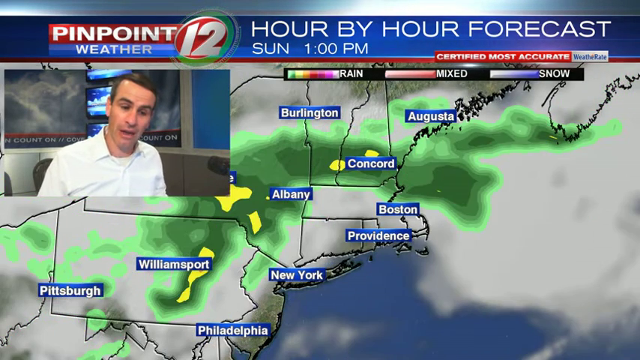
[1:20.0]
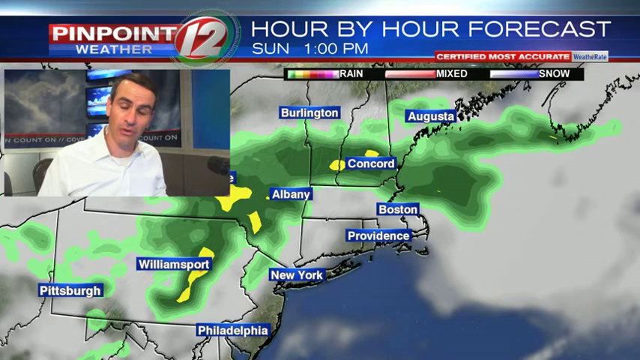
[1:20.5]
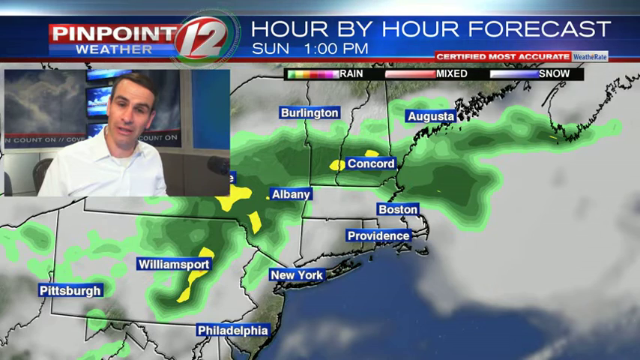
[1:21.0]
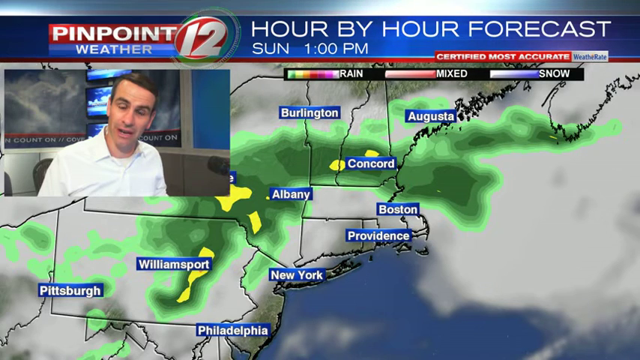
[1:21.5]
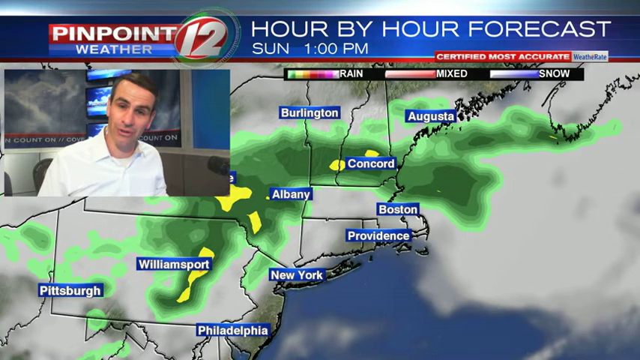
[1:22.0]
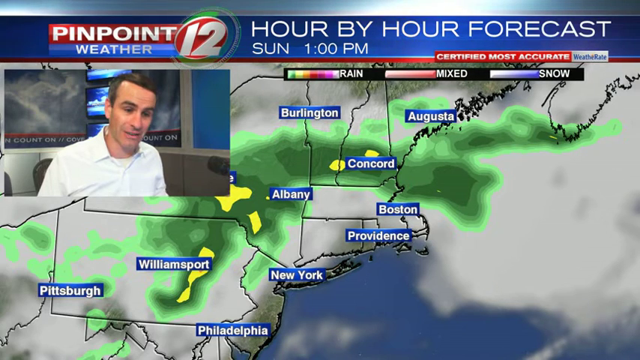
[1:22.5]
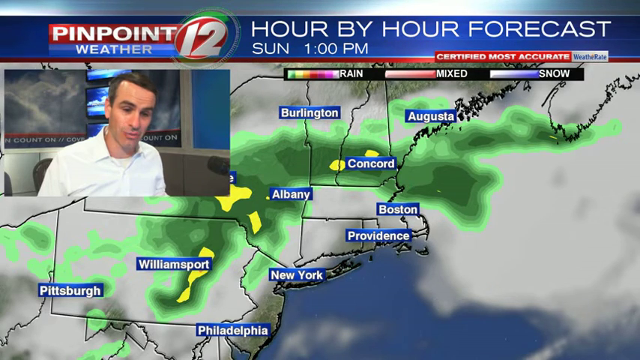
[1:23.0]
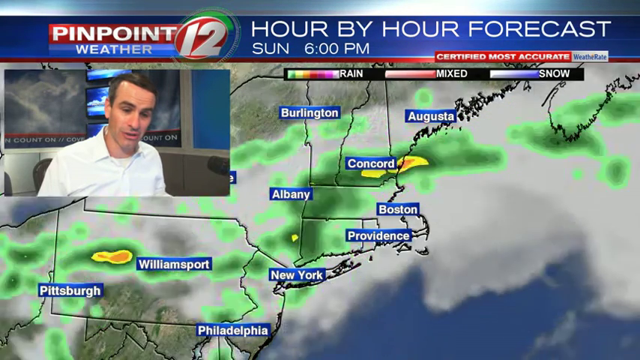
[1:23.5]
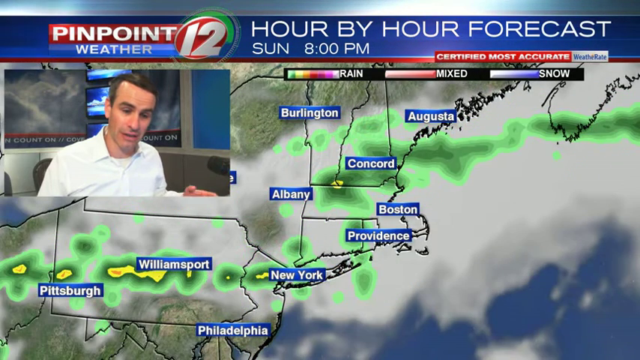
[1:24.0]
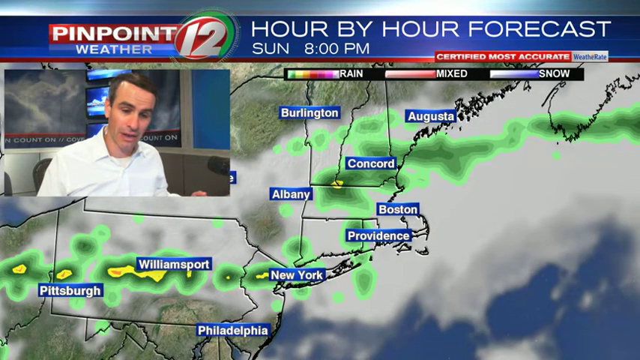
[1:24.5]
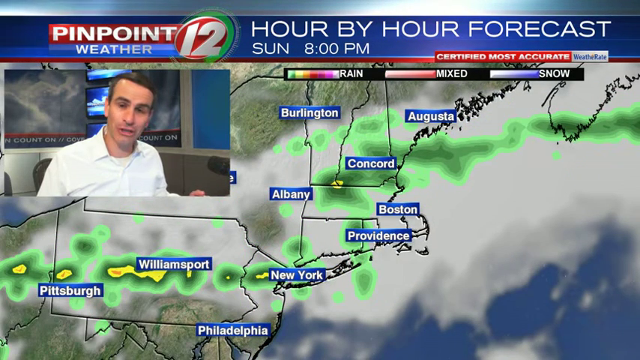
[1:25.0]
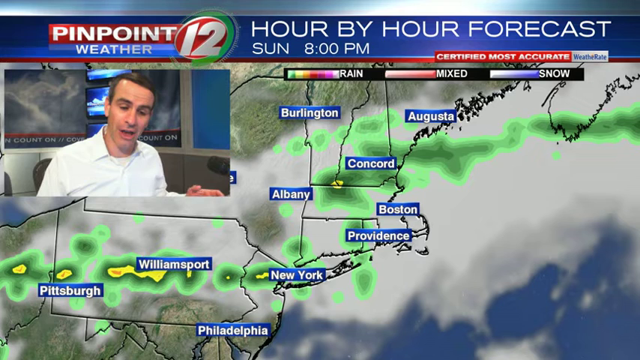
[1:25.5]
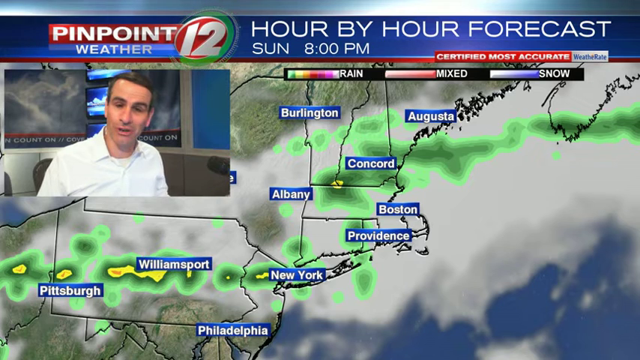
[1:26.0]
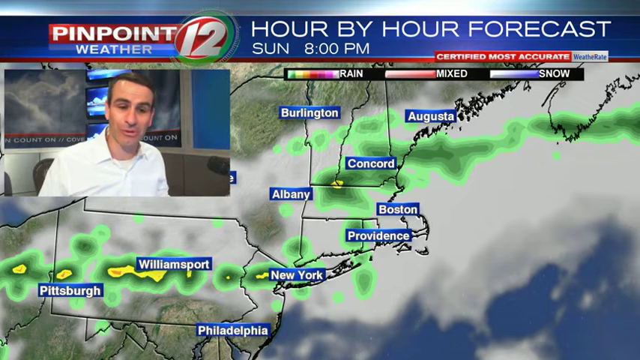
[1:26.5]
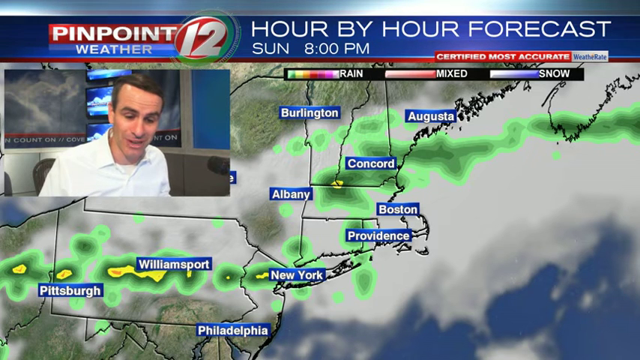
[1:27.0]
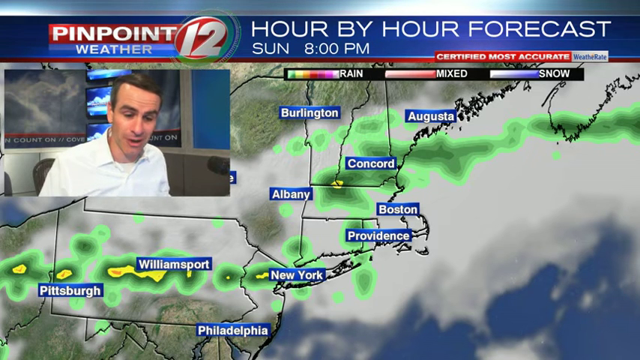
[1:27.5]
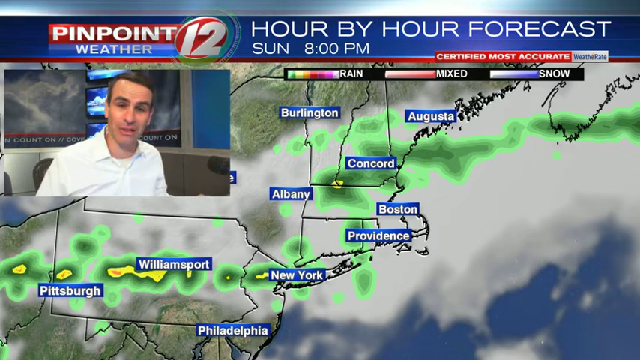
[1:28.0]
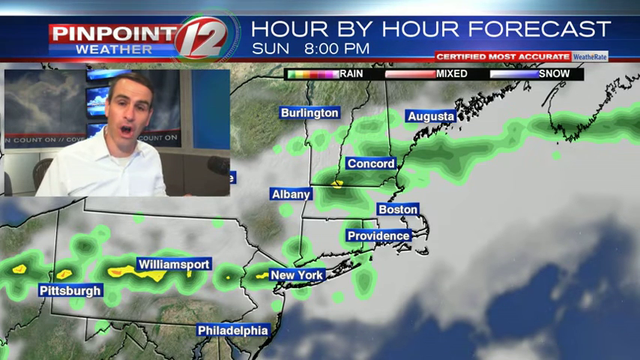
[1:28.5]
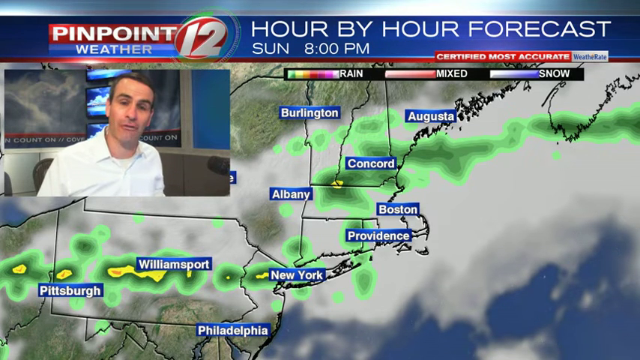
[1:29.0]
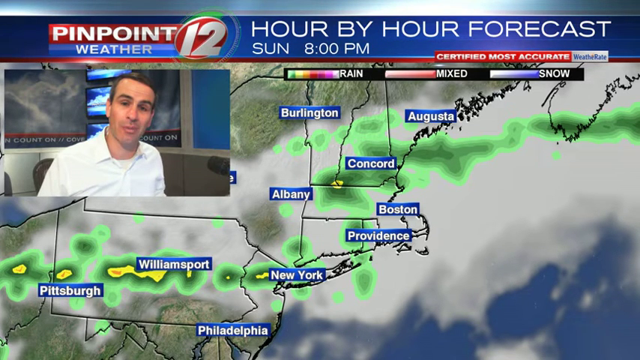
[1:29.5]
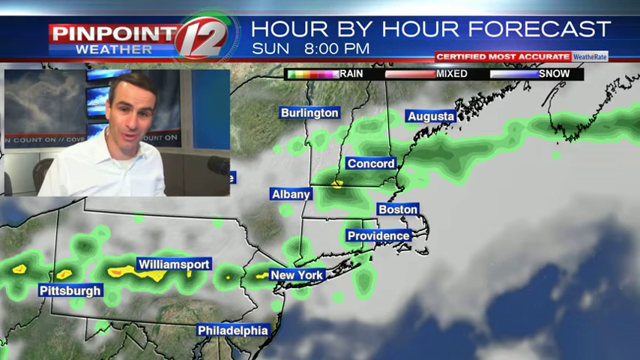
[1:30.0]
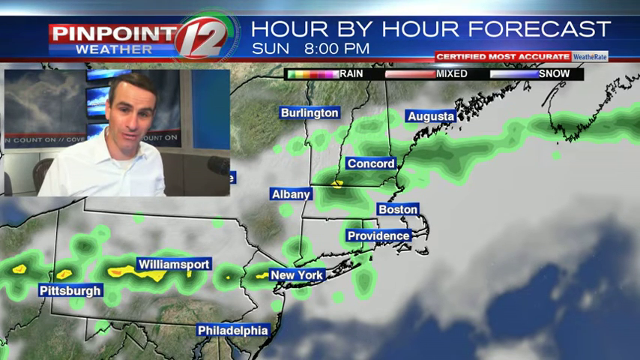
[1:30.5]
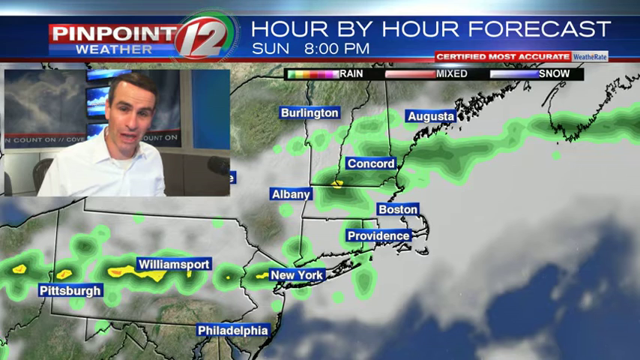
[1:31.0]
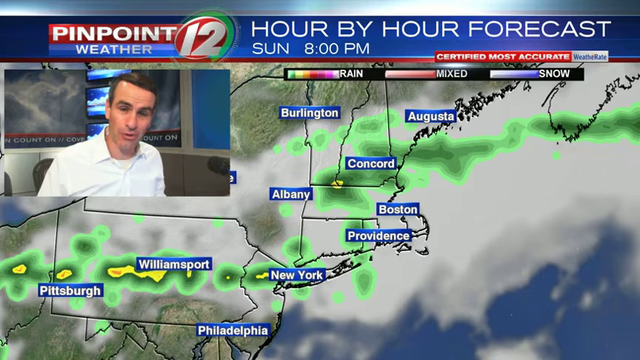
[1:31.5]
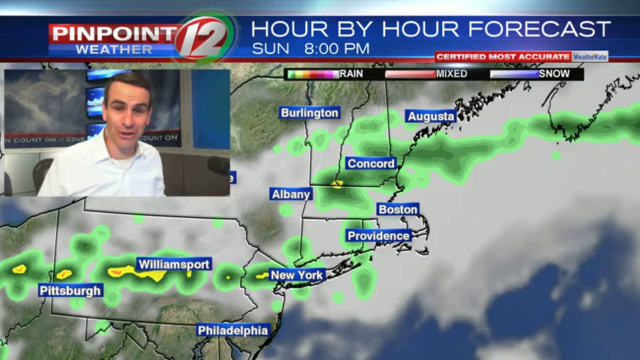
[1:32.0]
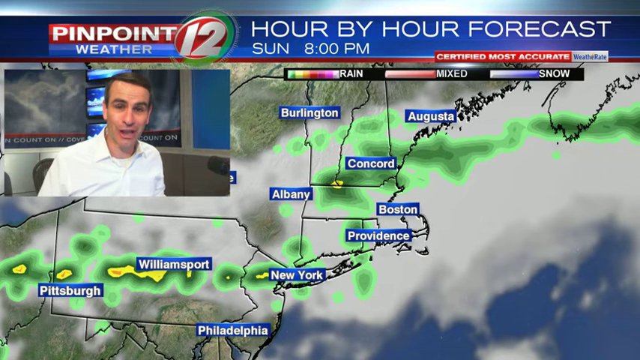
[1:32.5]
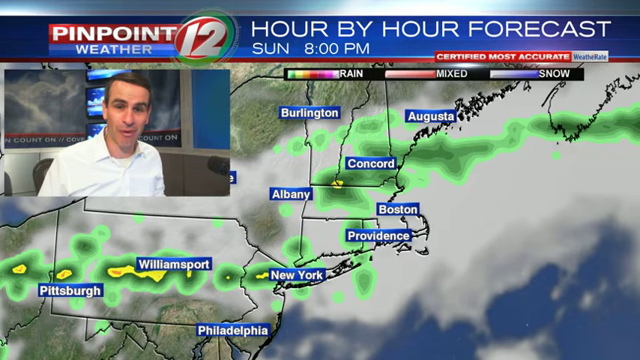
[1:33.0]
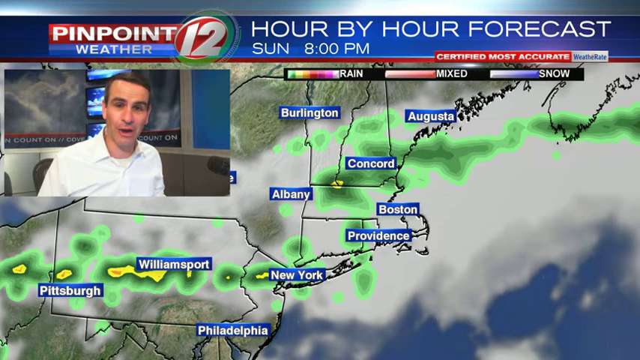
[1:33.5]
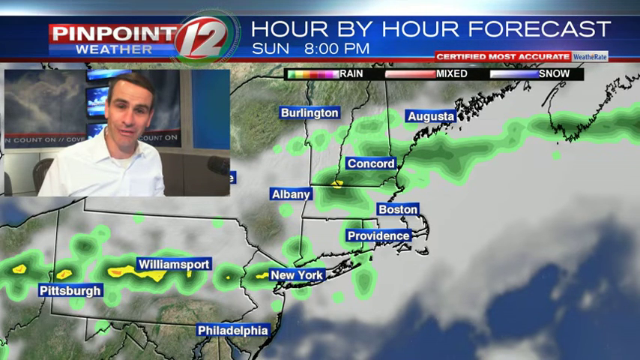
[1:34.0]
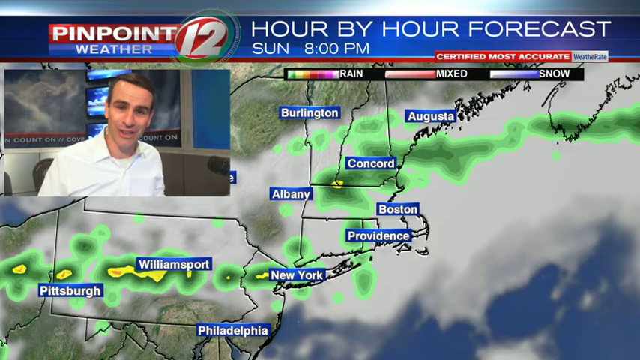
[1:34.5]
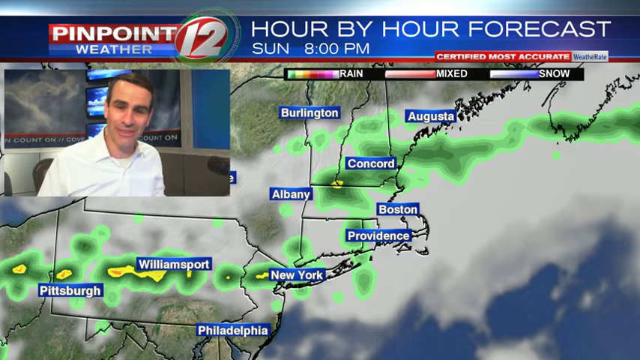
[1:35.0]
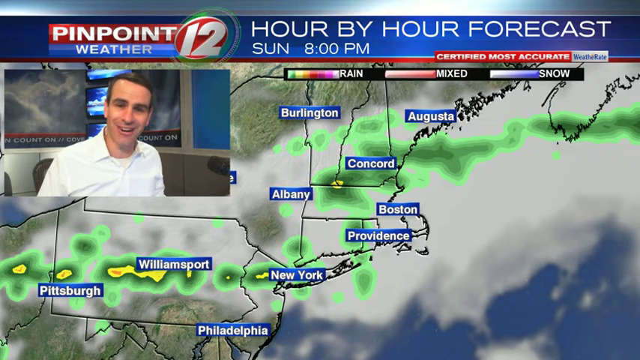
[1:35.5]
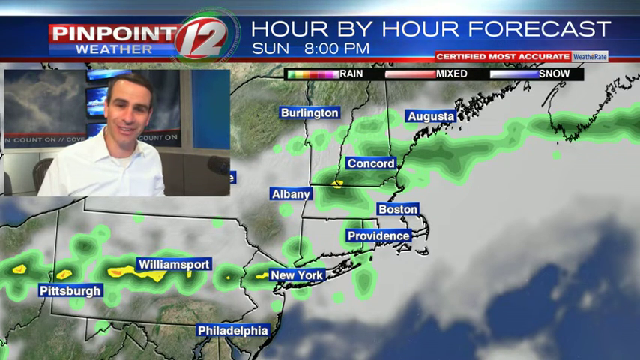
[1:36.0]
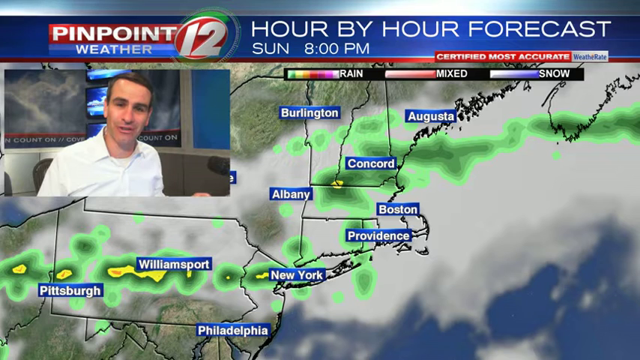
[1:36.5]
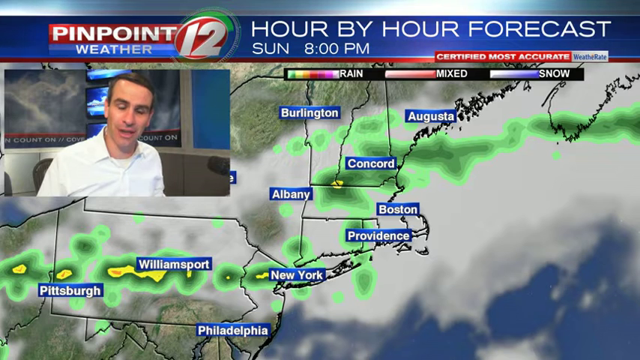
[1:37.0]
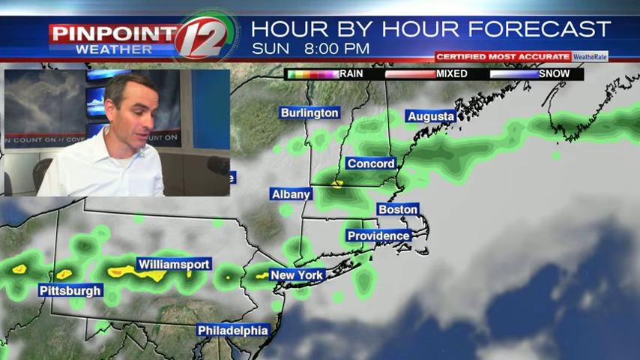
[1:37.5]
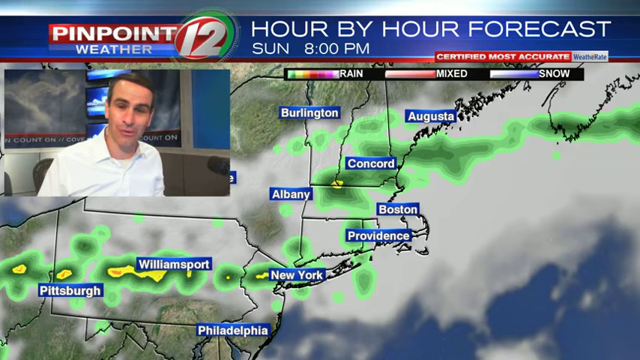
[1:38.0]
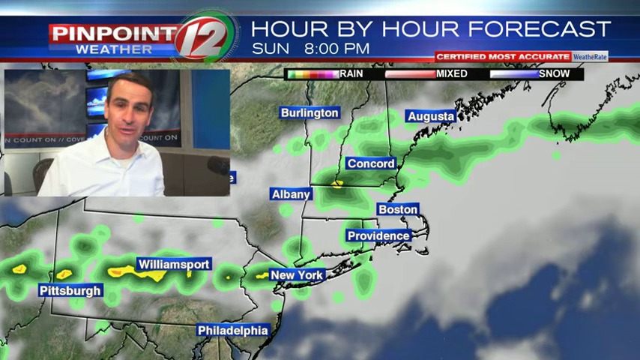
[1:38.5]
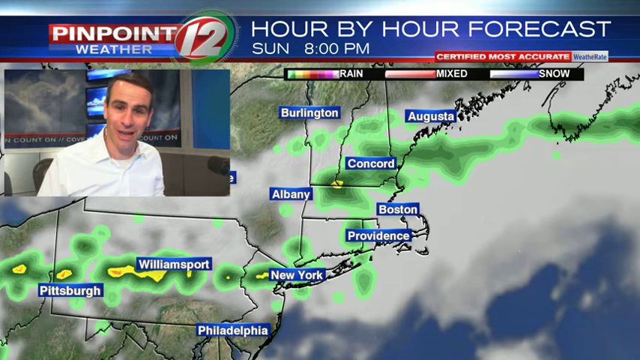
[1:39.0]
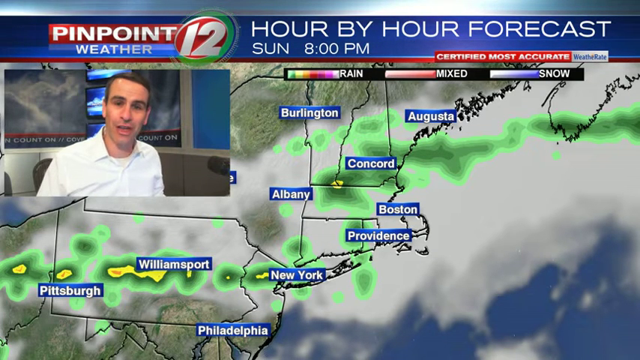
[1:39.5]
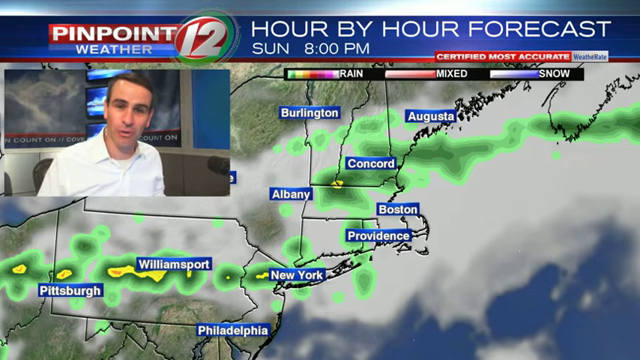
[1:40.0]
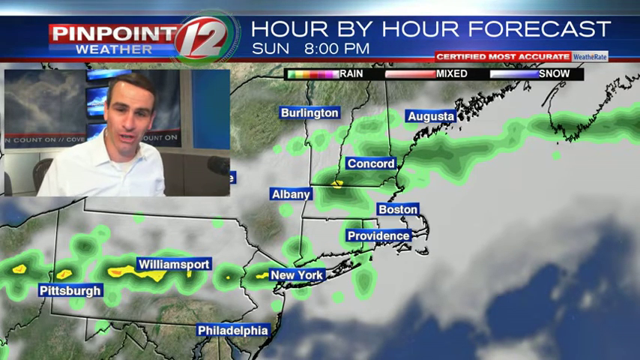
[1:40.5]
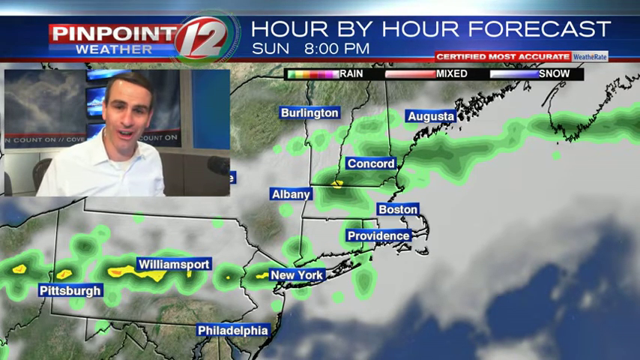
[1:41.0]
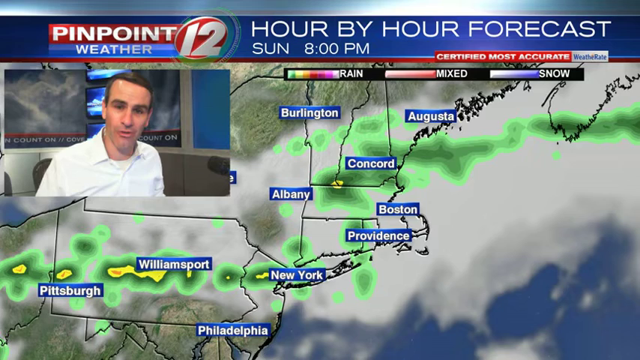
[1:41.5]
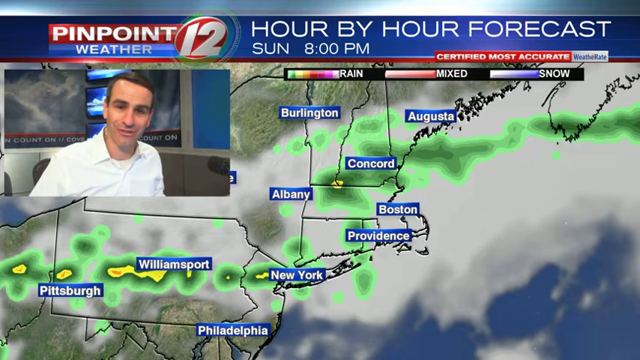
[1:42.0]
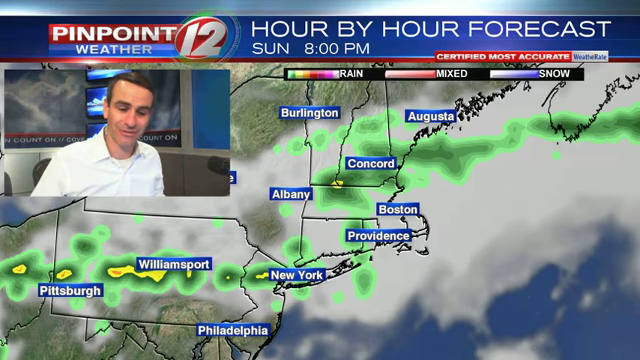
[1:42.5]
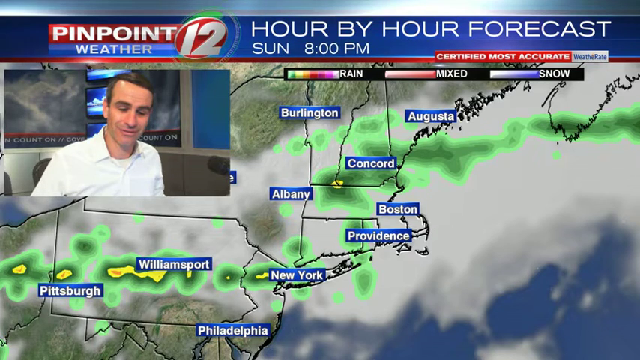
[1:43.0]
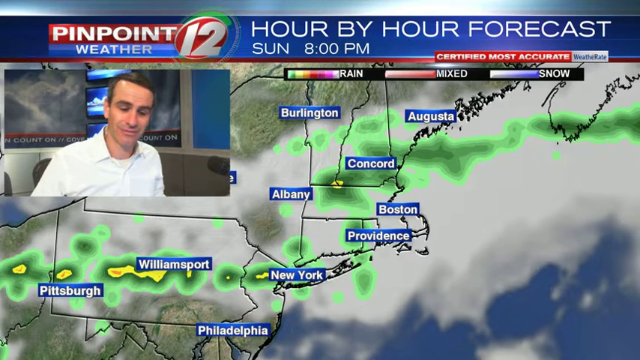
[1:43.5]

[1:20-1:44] The man continues to move the weather map, showing the rain affecting different cities. At Sunday at 1pm, cities such as Williamsport, Albany, Concord, Augusta and Pittsburgh are shown as not affected by rain, while Boston, Providence, New York, Philadelphia and Burlington are probably affected. The hours then move toward late Sunday at 8pm, with the clouds moving toward the east; by 8pm Boston is affected by rain, while the other cities seem to be dry, with low probabilities of rain.